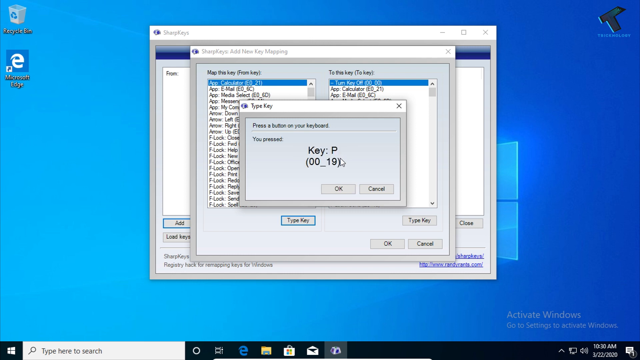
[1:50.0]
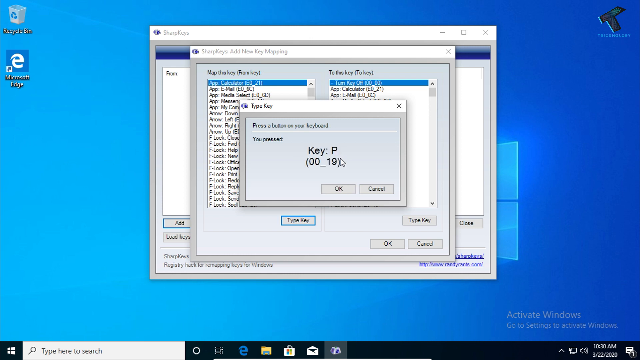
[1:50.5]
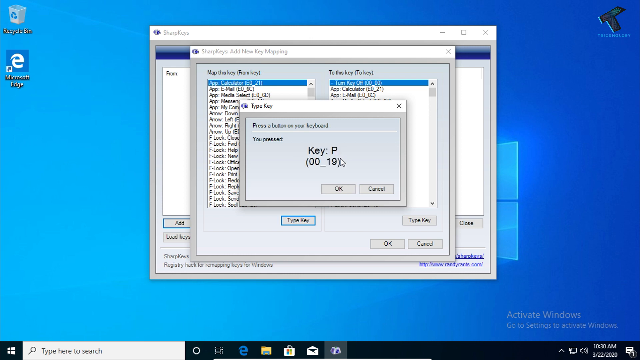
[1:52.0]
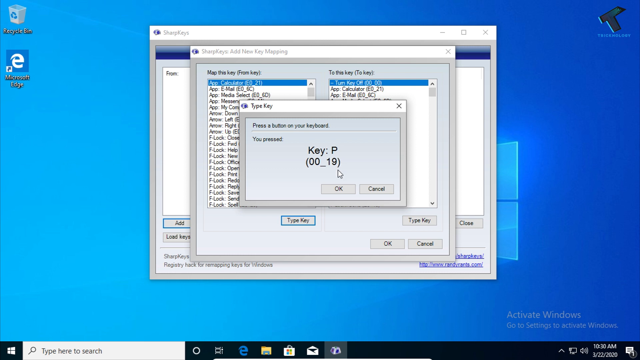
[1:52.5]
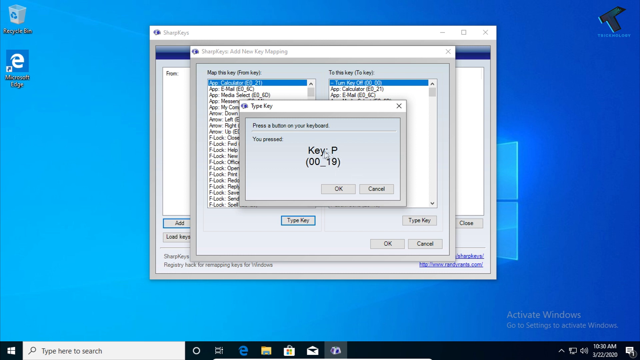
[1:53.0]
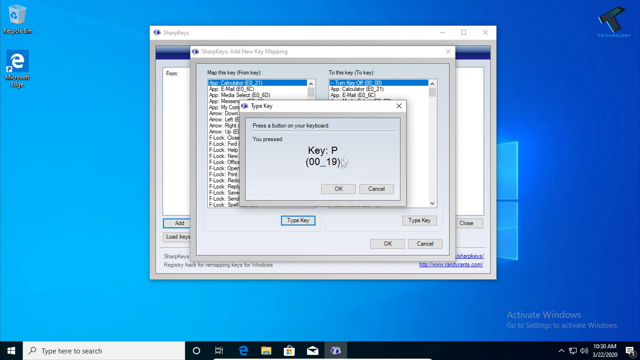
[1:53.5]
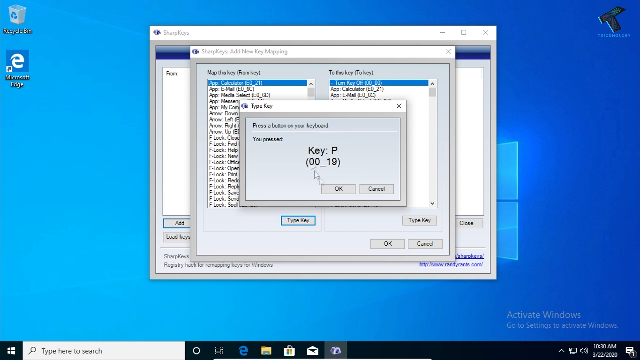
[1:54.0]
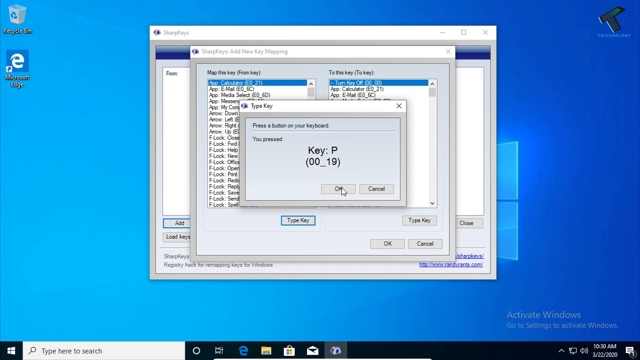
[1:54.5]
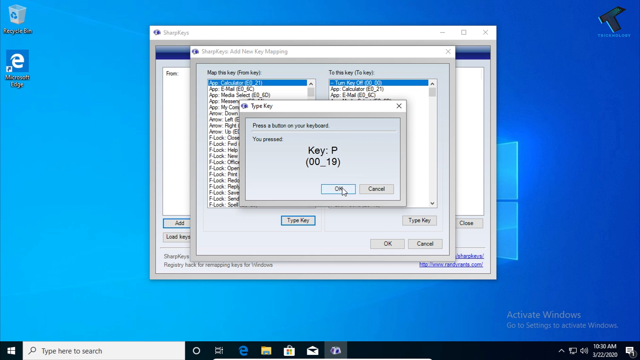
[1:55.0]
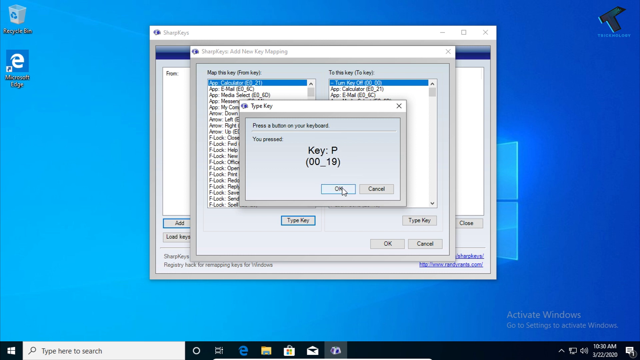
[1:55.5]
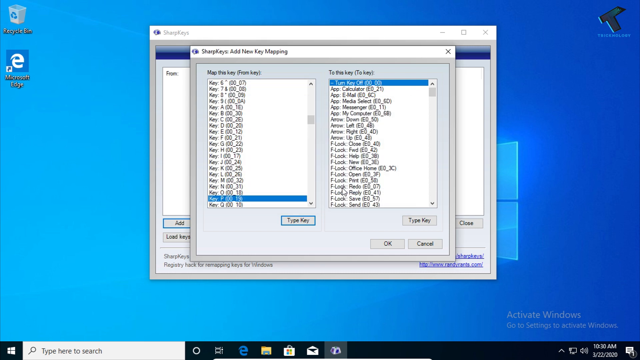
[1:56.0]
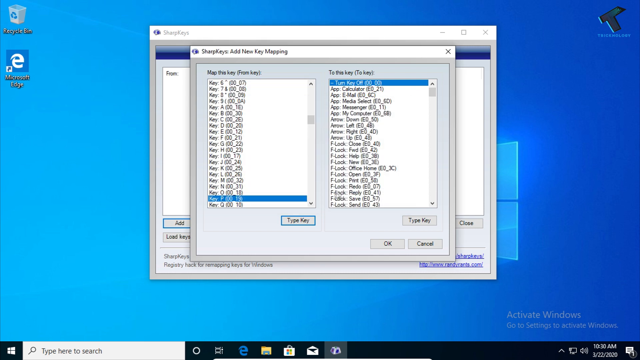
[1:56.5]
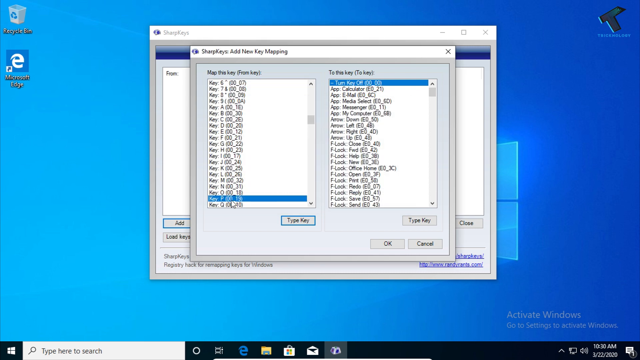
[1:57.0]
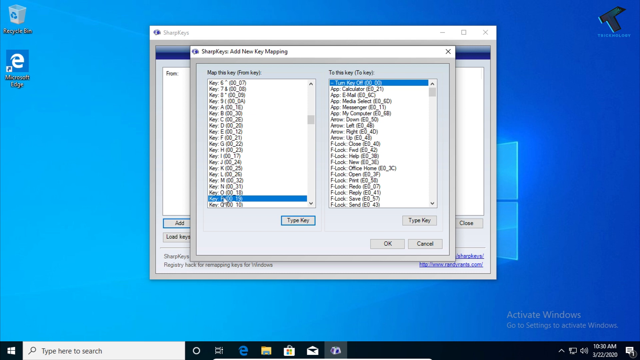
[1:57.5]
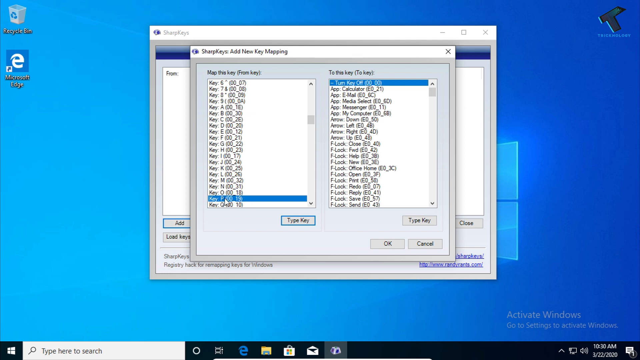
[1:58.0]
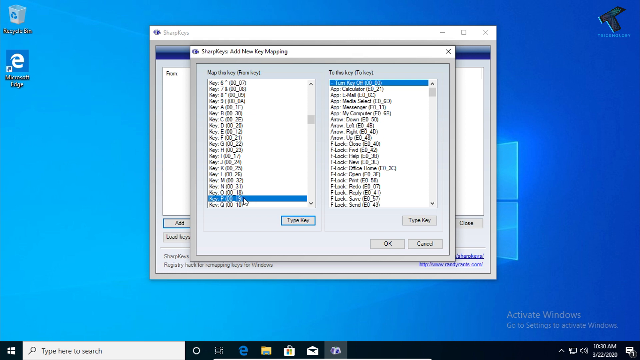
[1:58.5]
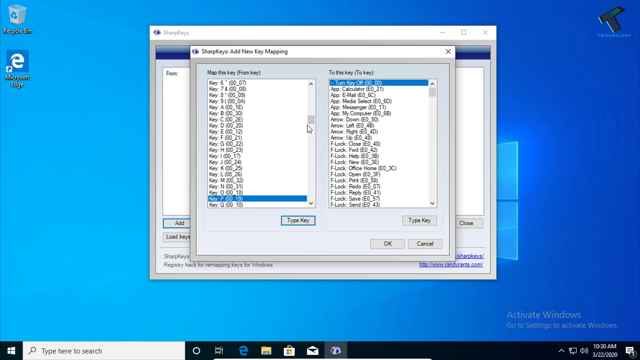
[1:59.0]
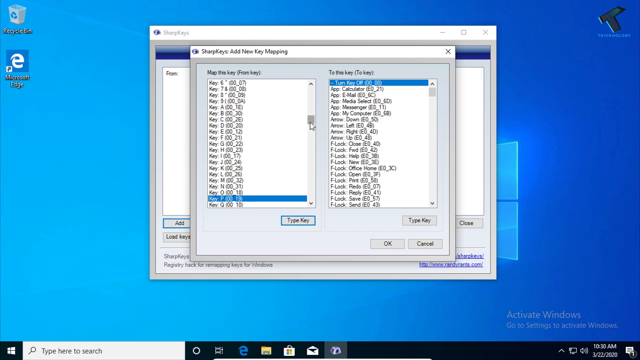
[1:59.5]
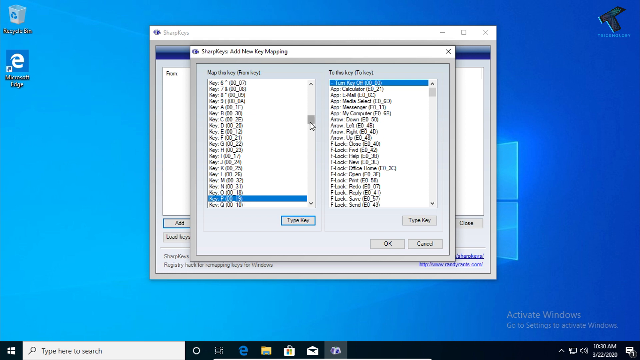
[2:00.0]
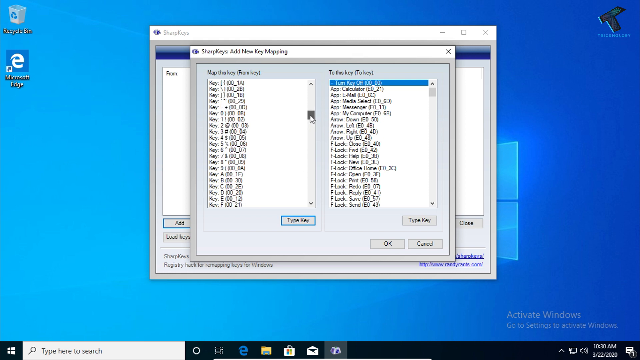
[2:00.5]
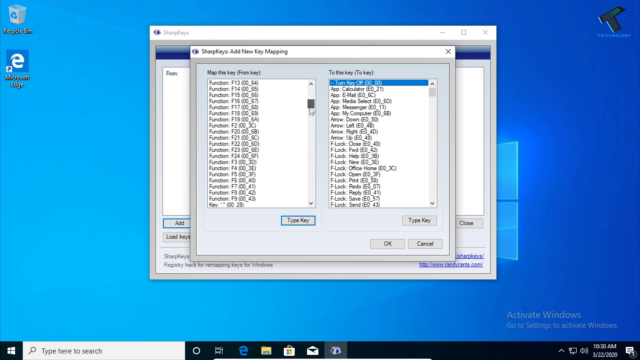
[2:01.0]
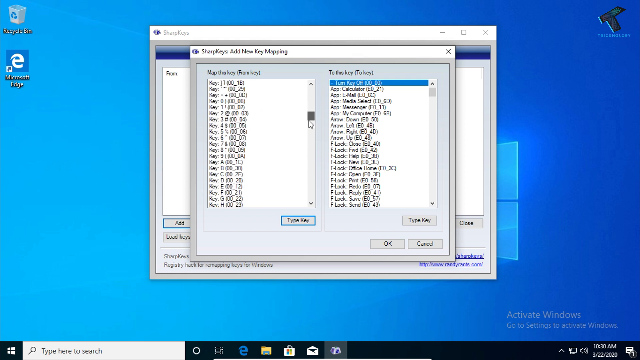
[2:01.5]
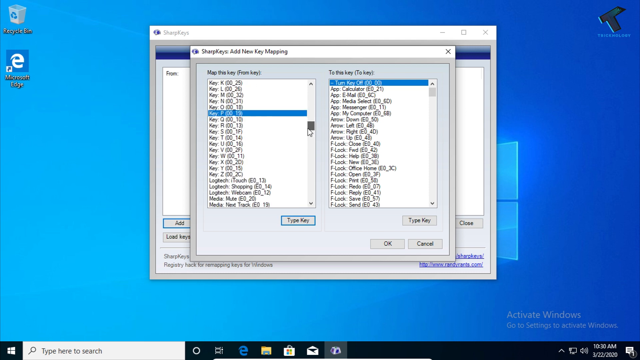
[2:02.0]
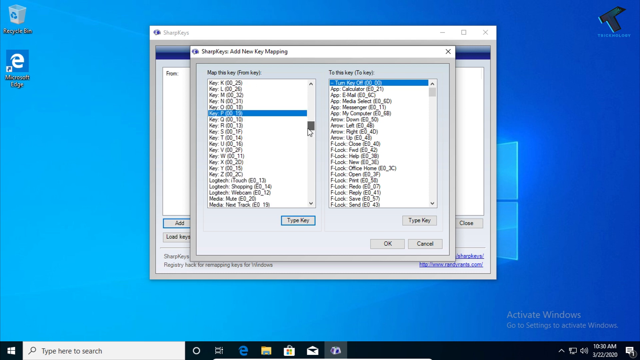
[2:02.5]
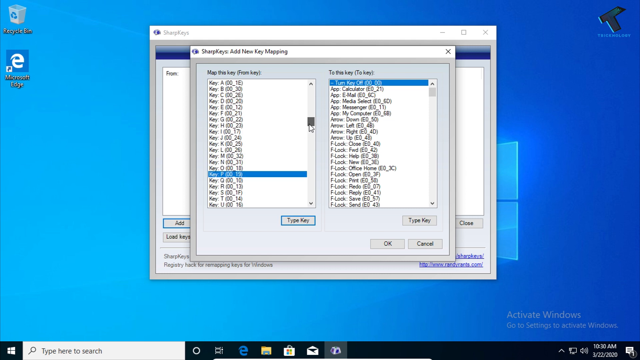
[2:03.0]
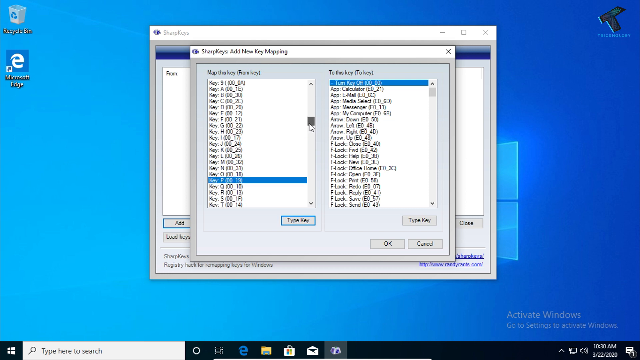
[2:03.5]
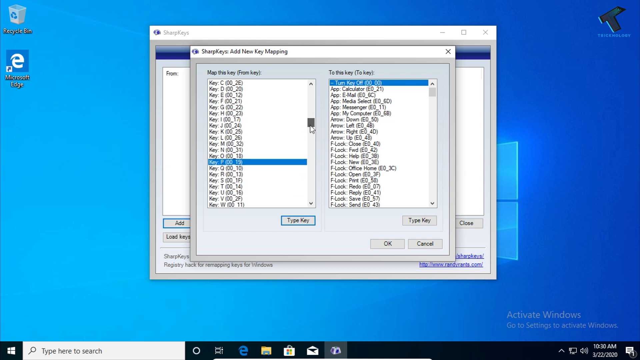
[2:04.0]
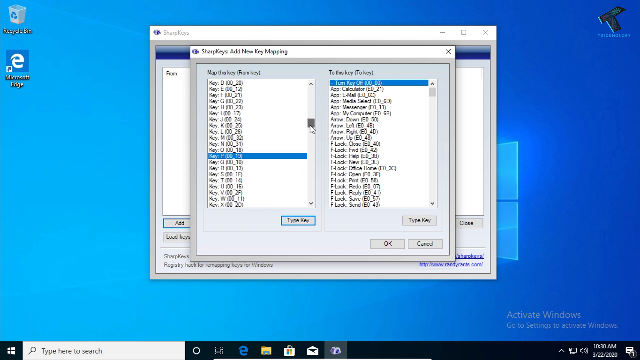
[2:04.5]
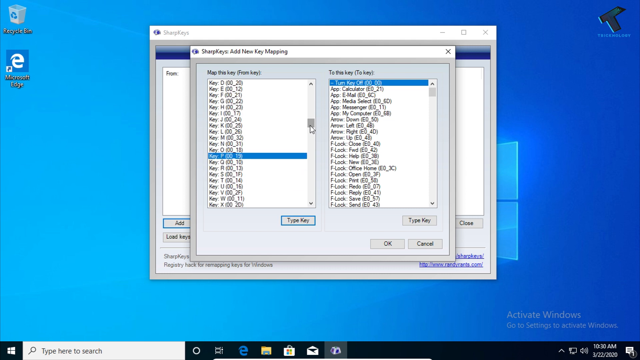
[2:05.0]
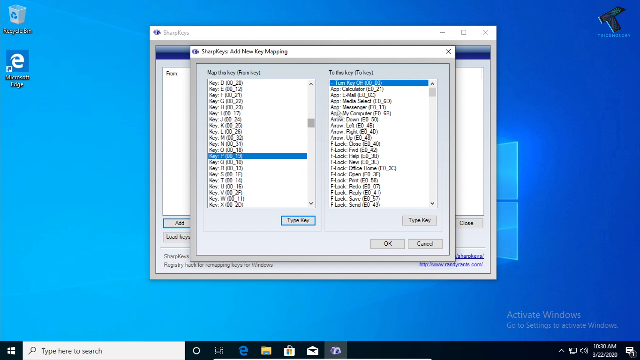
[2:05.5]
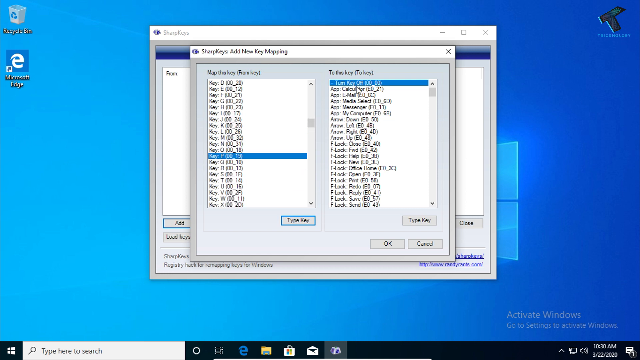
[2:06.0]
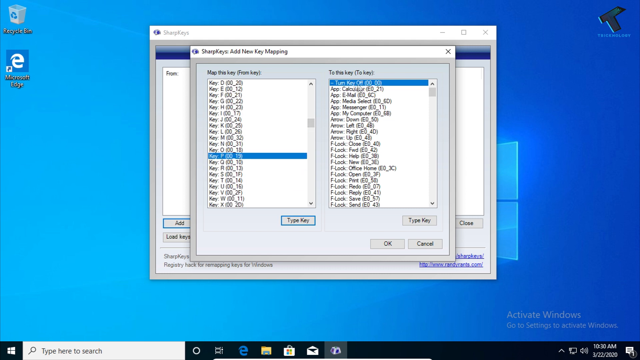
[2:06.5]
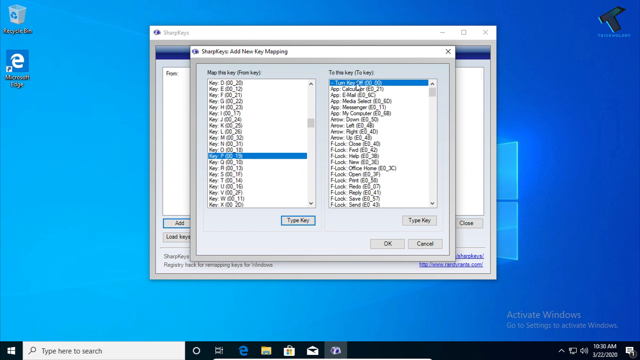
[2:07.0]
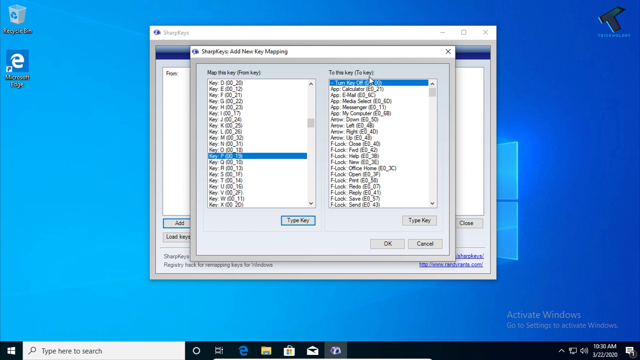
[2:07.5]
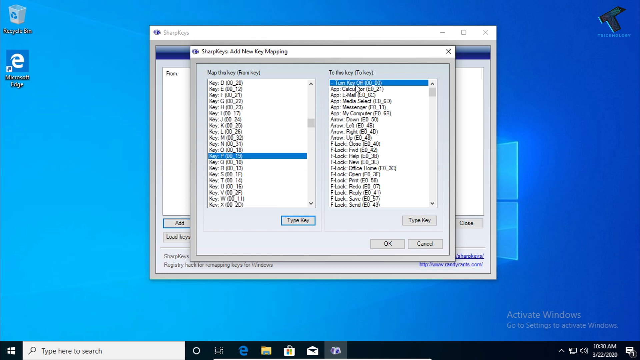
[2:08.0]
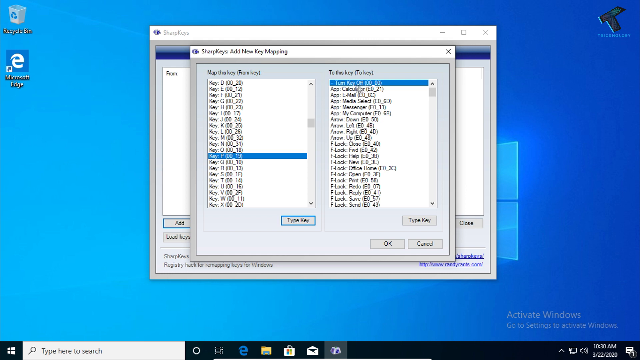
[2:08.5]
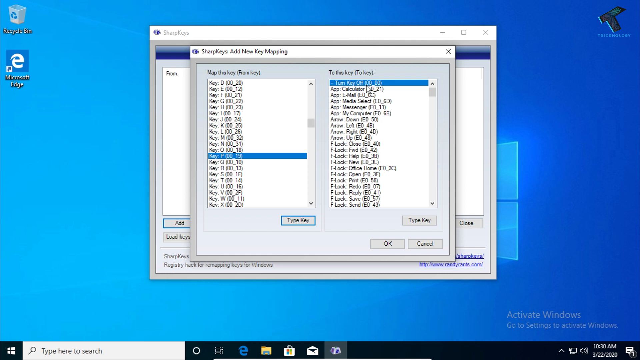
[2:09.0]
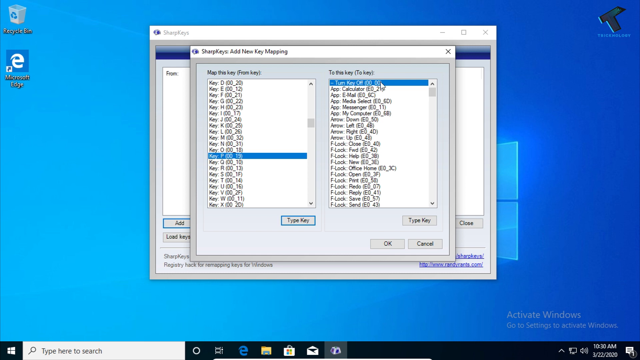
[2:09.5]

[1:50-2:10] The key mapping pop-up is still open, with key P apparently mapped to 00_19. The cursor moves around in circles and then selects OK. Back in the key mapping window, the user seems to scroll through various options; most of the keys appear to be already mapped to different, unidentified functions. The user apparently looks at the P key and what it is mapped to again, then scrolls a little up and down through the keys, moving the cursor back and forth.